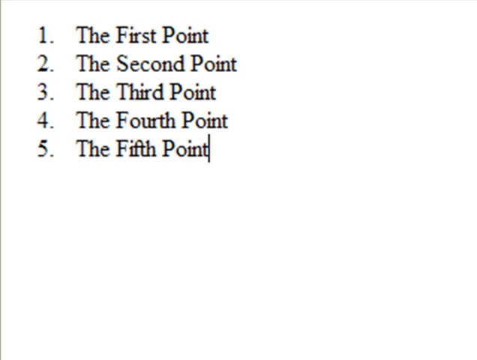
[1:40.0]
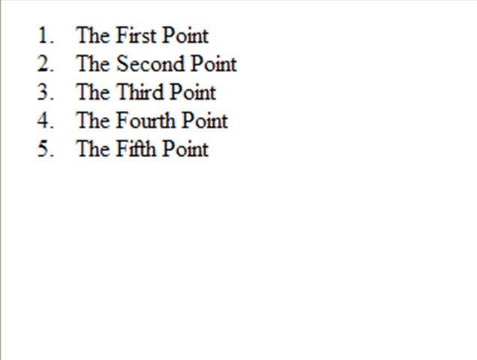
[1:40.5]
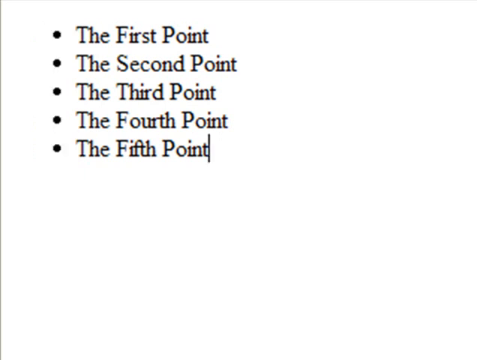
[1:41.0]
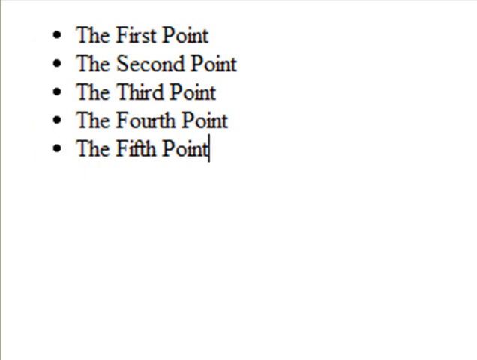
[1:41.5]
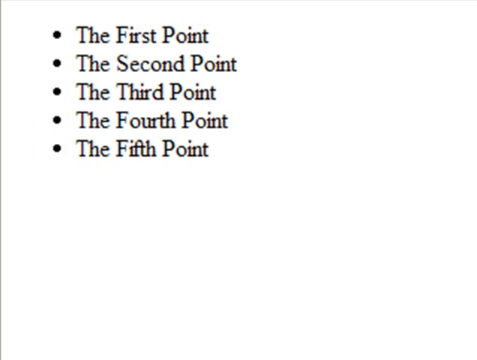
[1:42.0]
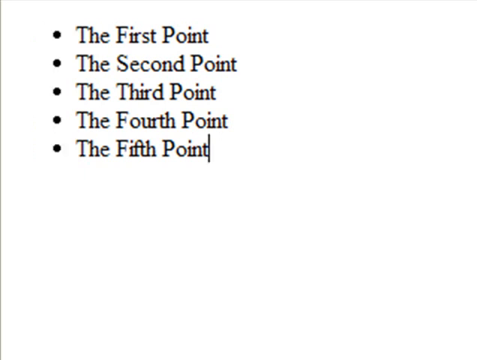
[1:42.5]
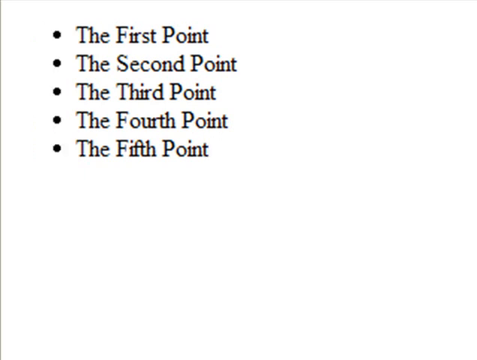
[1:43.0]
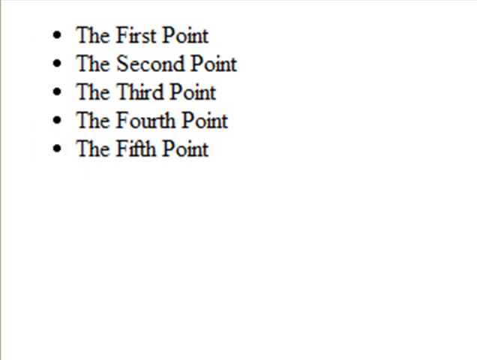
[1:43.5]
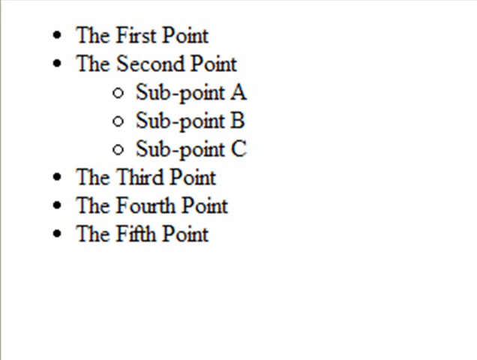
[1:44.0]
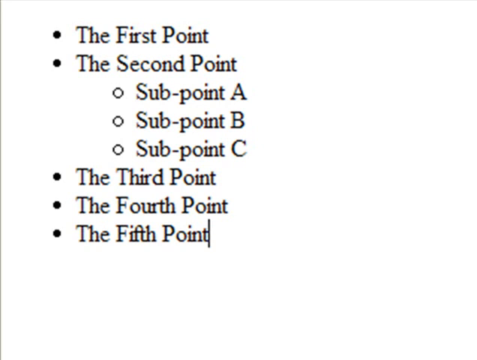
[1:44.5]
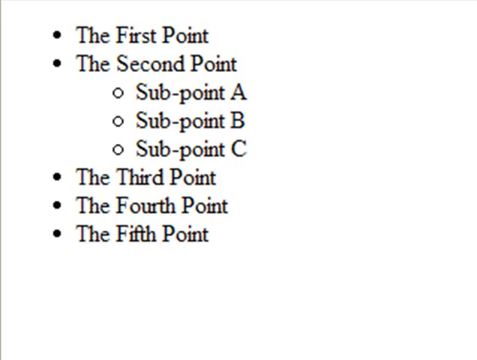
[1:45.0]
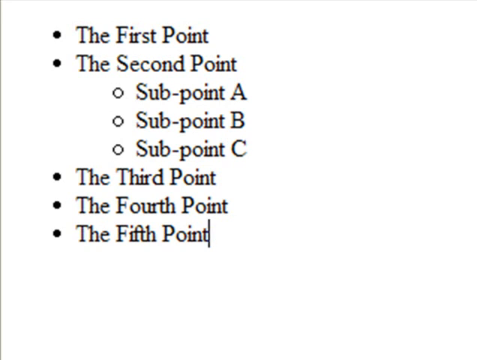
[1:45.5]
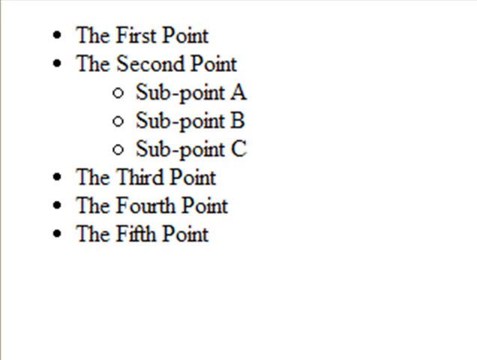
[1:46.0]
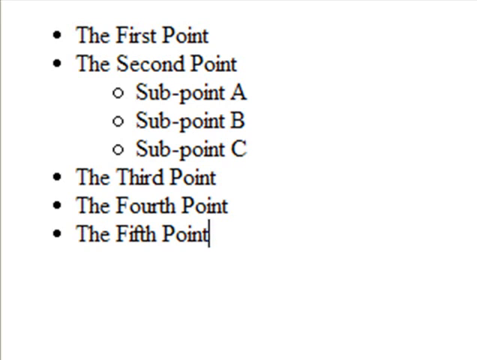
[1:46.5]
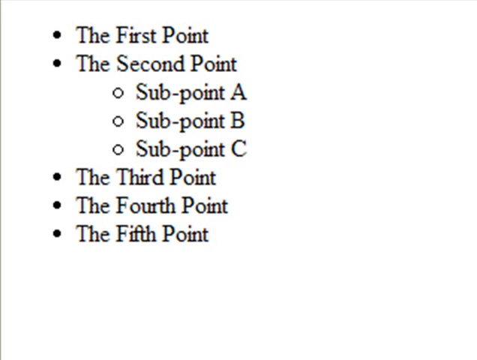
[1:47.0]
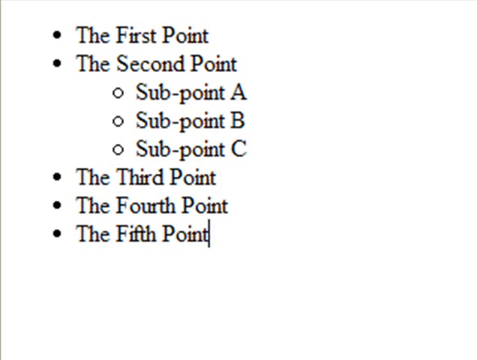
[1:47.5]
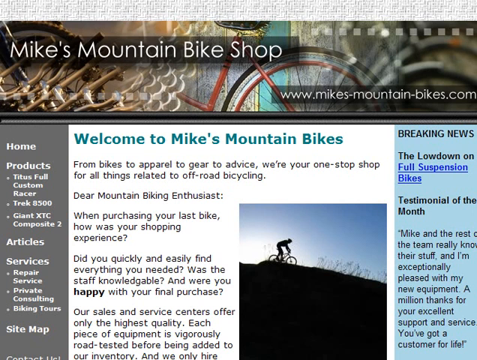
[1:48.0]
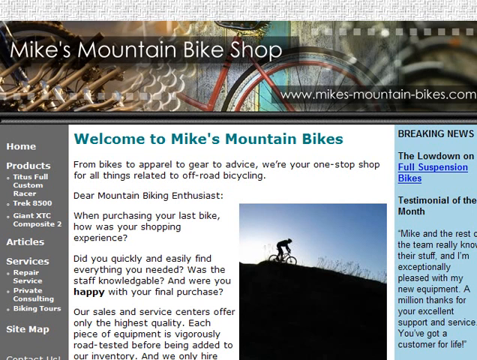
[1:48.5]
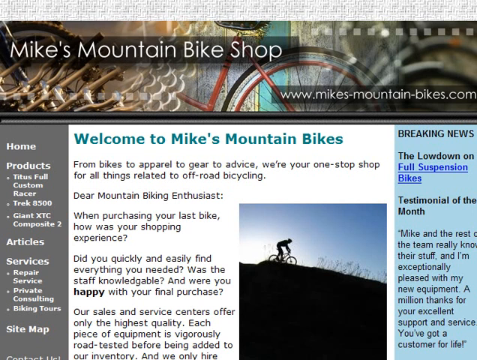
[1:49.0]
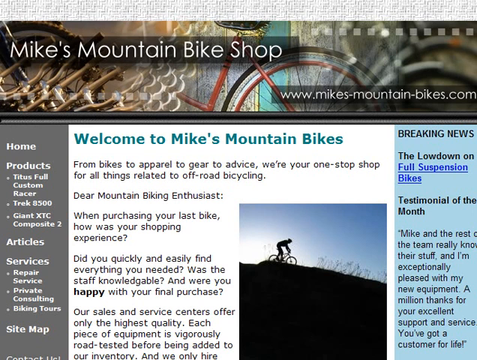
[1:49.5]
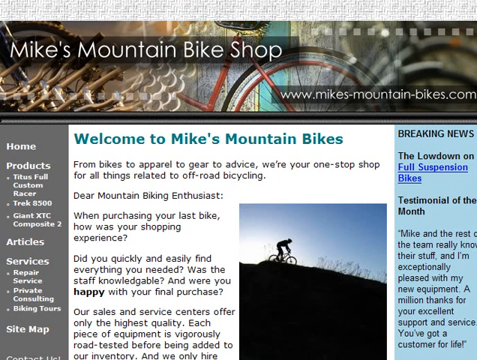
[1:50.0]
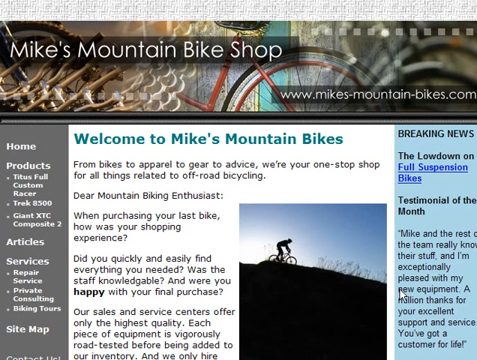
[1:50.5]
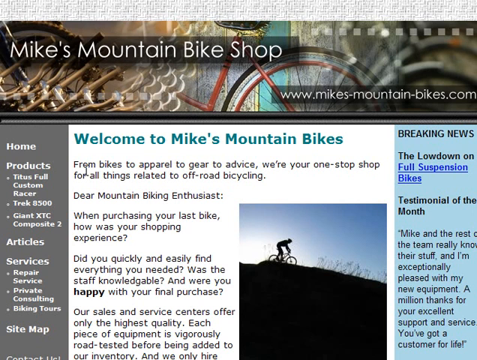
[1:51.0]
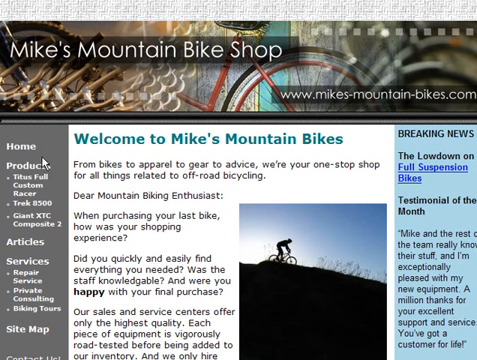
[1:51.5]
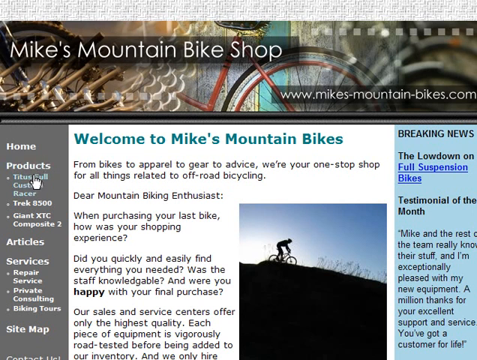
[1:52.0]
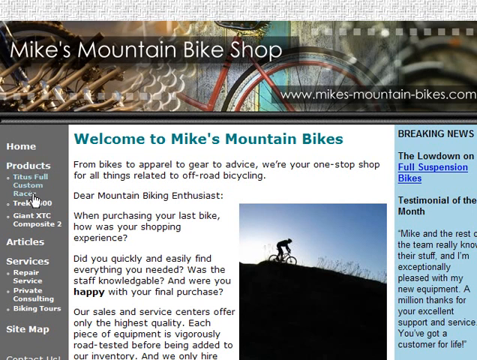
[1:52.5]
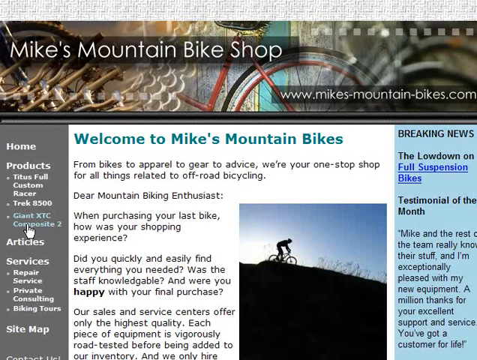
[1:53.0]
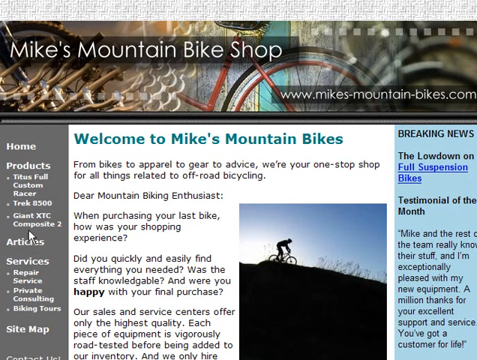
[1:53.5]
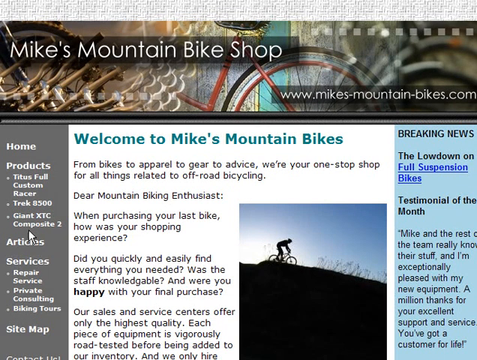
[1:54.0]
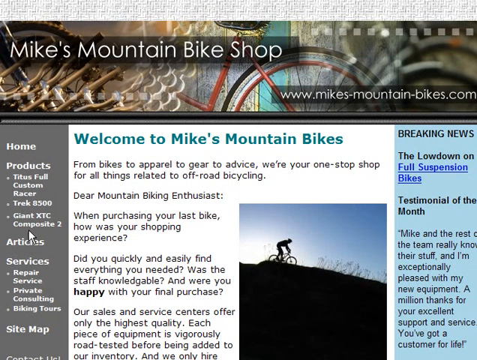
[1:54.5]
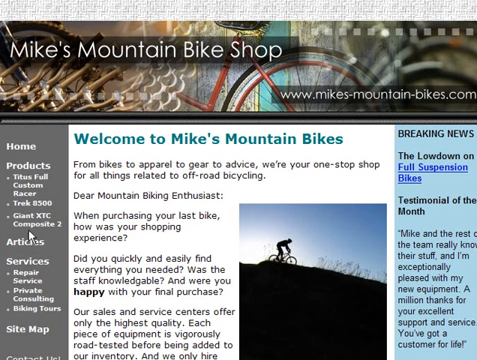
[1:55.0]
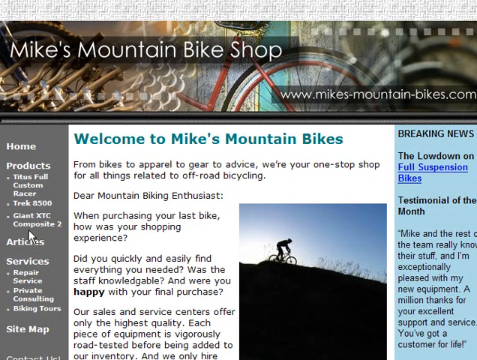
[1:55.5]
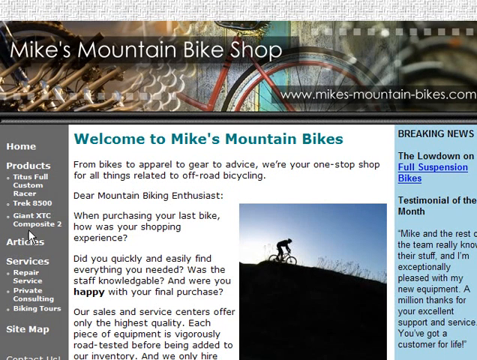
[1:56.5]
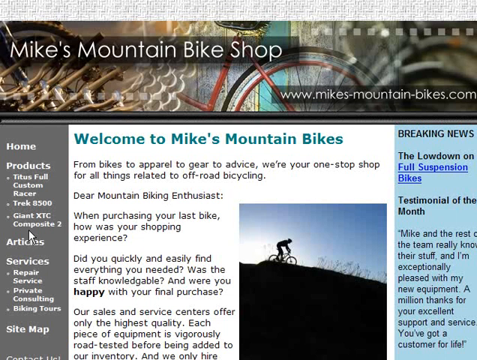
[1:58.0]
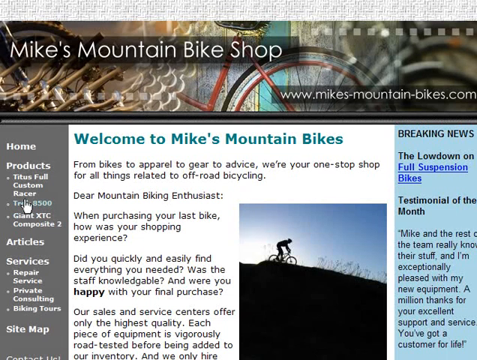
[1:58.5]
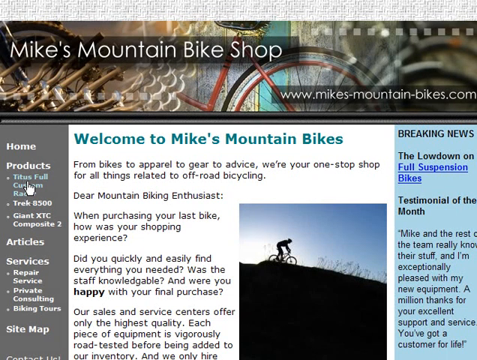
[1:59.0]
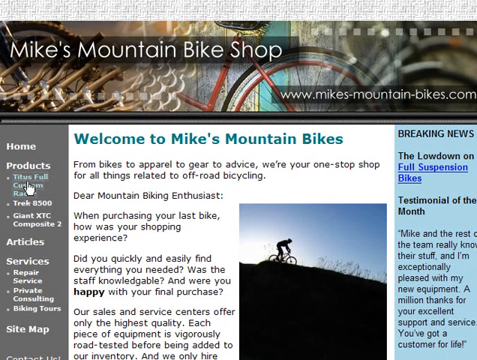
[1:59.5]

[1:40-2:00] The numbered list from "the first point" to "the fifth point" is typed on a white canvas, and the items are then turned into bullet points. Next, the Mike's Mountain Bike Shop website appears with "Welcome to Mike's Mountain Bikes". The text and products are looked over without anything being clicked at first. Just before the shot ends, "Titus full custom racer", apparently a type of bike, is clicked. Its page reads "featuring a titanium skeleton, this road frame climbs like a dream. It's stable on descents and smooth over the rough. Nothing is quite as exhilarating as getting out of the saddle to climb on our full custom racer and feeling the direct and instantaneous power to the rear wheel."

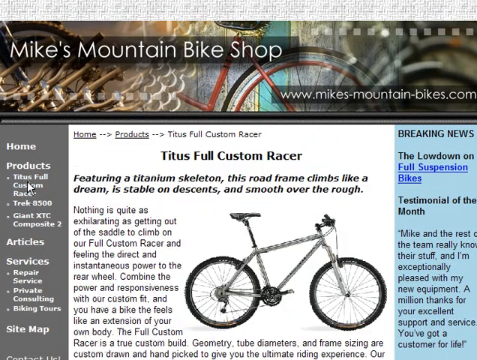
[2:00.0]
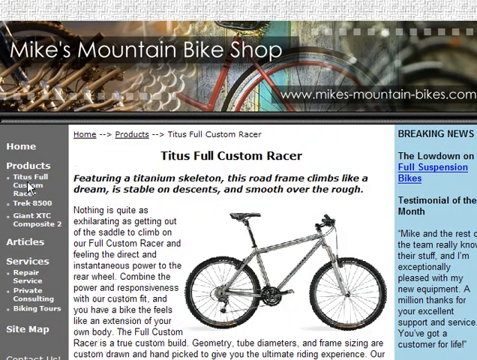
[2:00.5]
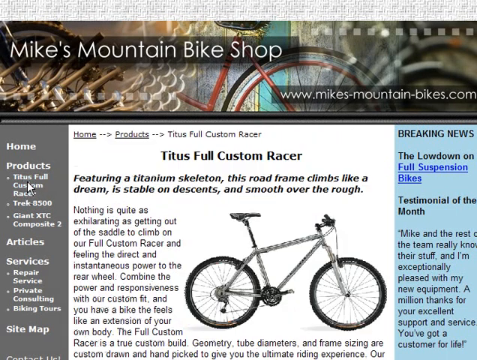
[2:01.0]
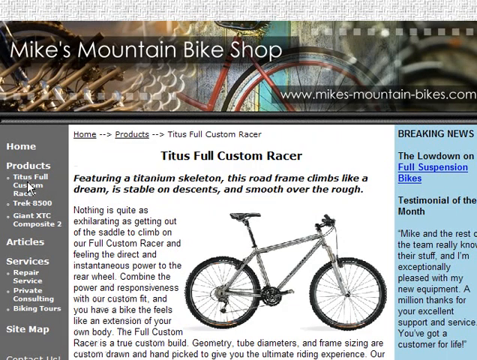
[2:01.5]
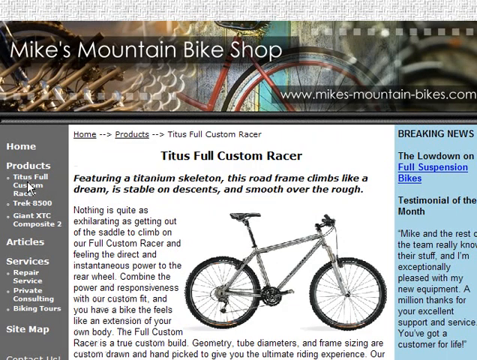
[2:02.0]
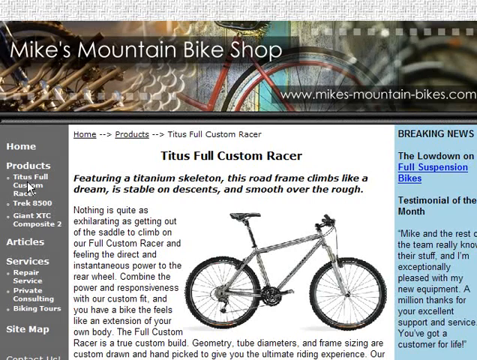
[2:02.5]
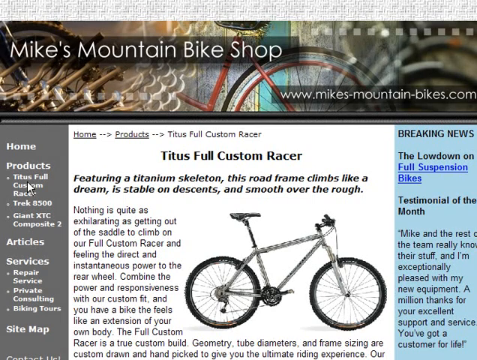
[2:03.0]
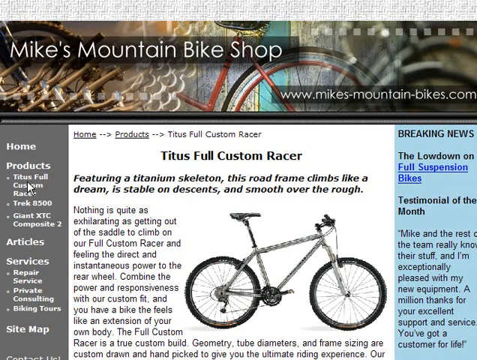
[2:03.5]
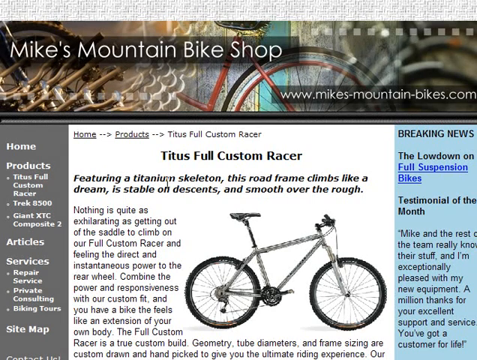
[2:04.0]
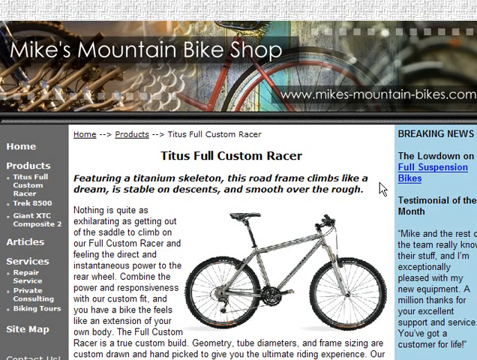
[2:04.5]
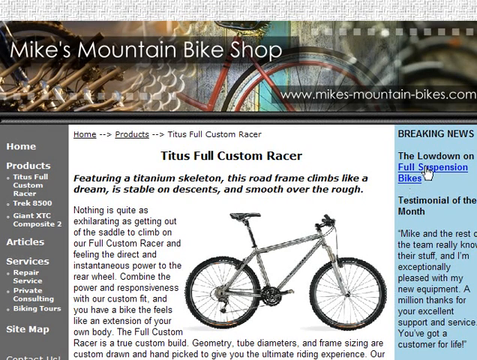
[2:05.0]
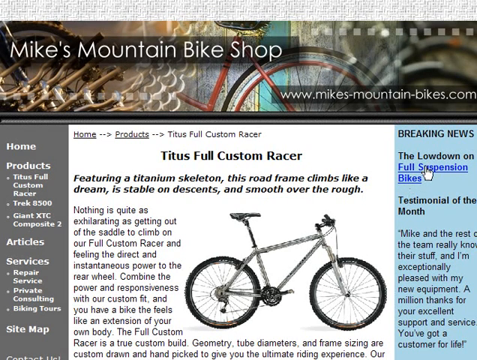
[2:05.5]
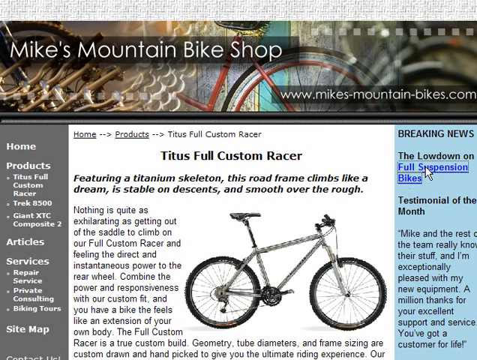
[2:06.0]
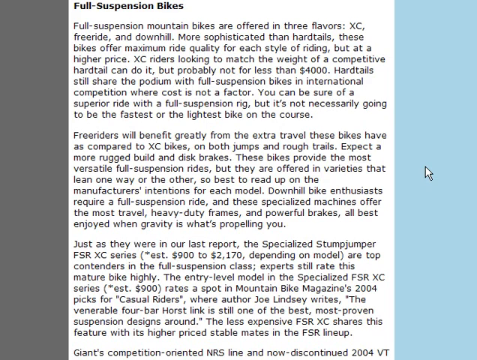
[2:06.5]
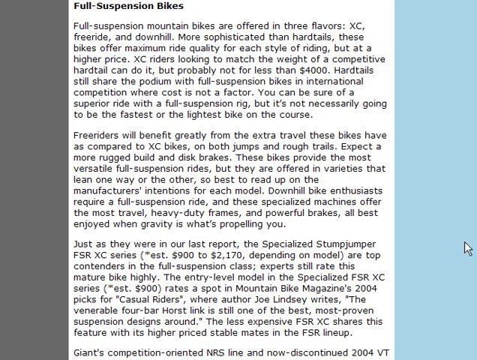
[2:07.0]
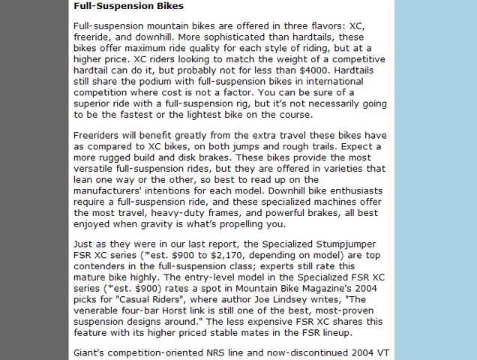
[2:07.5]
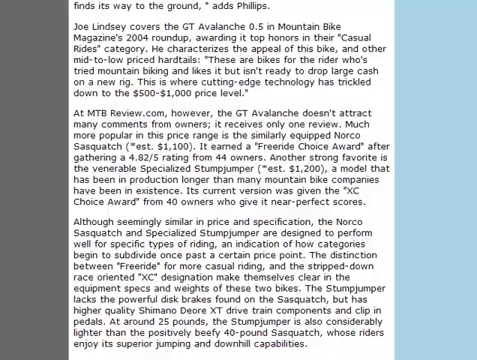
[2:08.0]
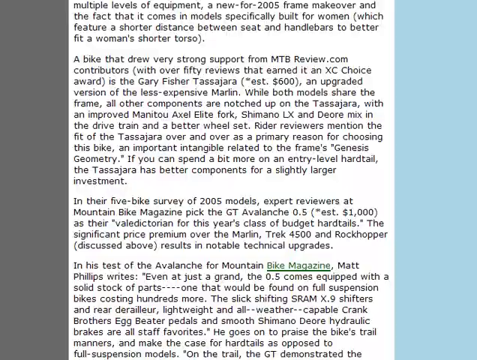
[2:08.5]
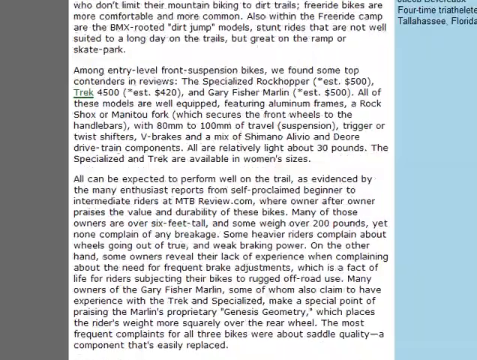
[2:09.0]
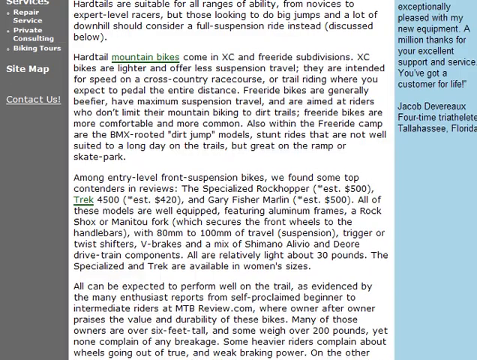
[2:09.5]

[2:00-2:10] The Mike's Mountain Bike Shop page shows a bike under "Titus Full Custom Racer", with text continuing "Combine the power and responsiveness of our custom fit, and you have a bike that feels like an extension of your own body. The full custom racer is a true custom build." The view then moves to another slide titled "full suspension bikes" with a block of text, and the page is scrolled down.